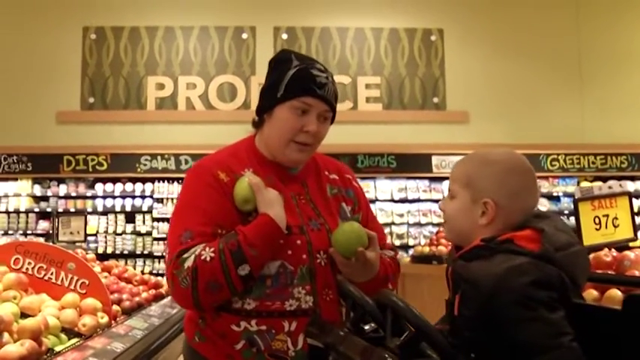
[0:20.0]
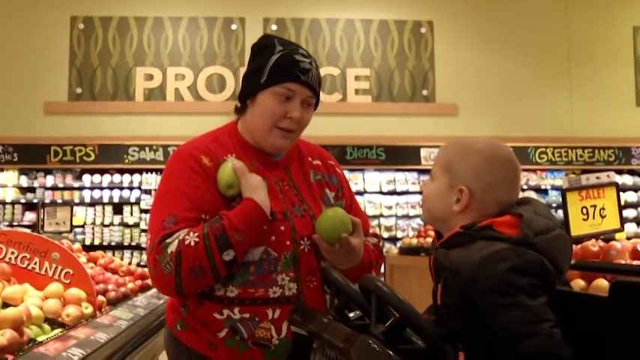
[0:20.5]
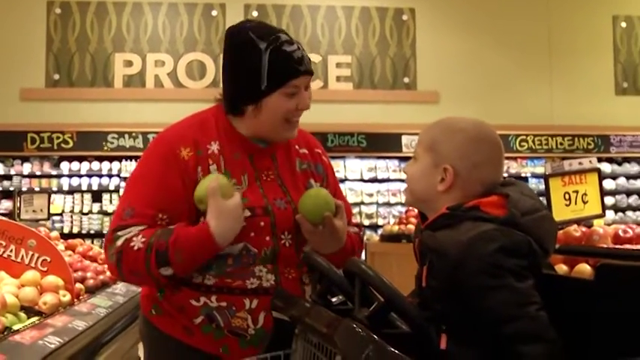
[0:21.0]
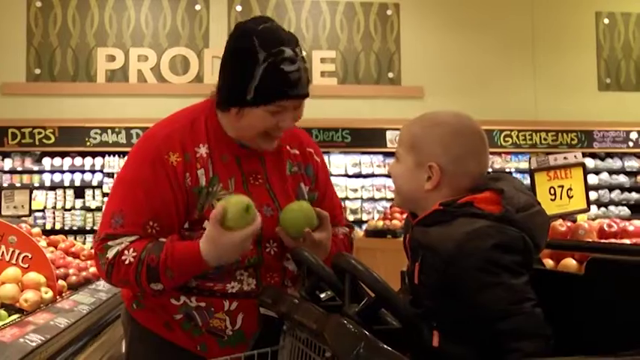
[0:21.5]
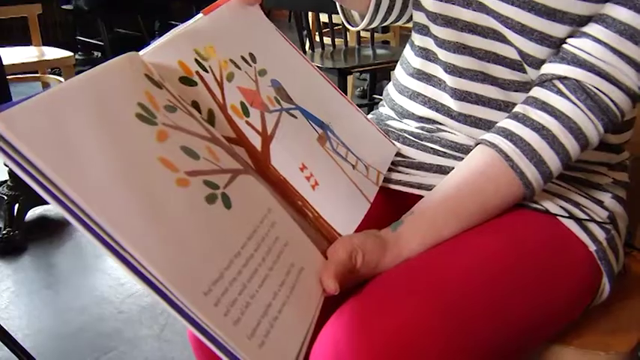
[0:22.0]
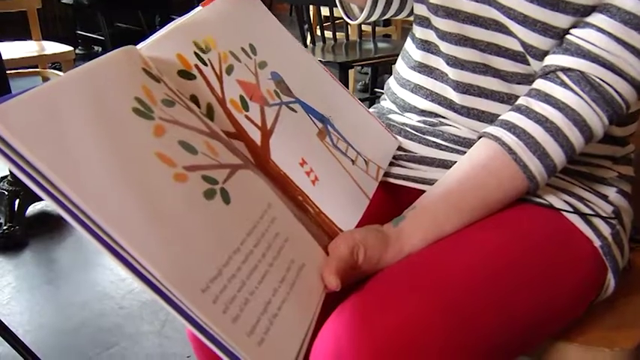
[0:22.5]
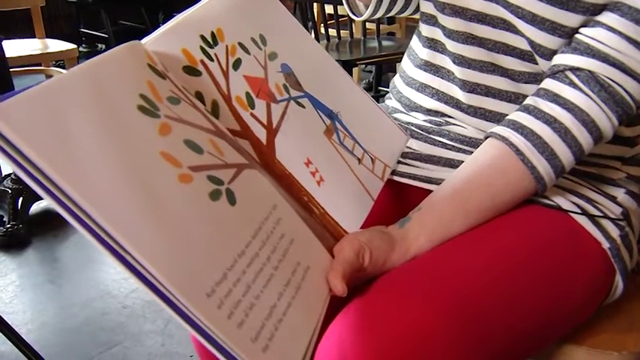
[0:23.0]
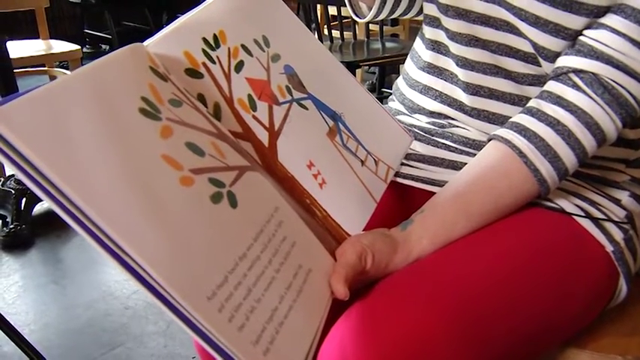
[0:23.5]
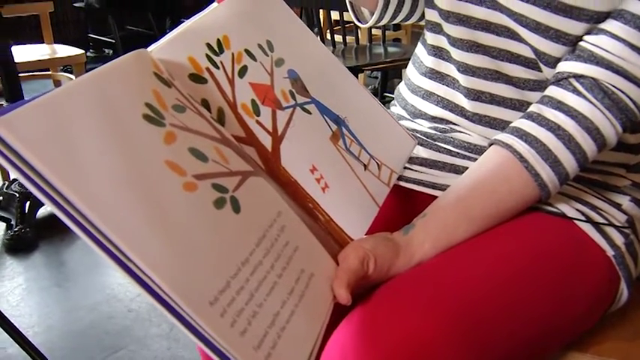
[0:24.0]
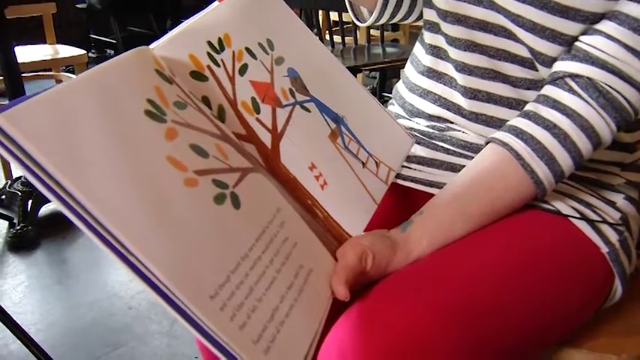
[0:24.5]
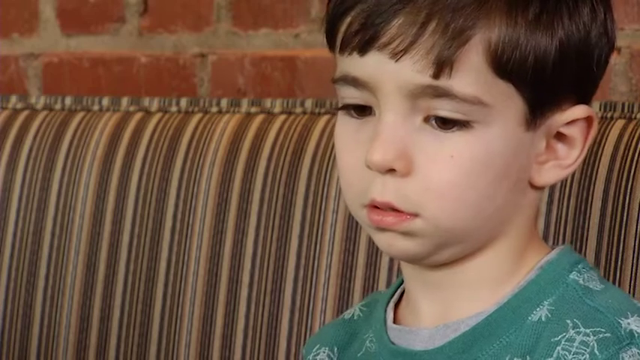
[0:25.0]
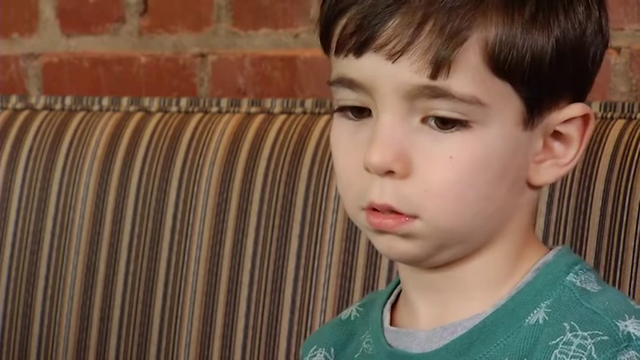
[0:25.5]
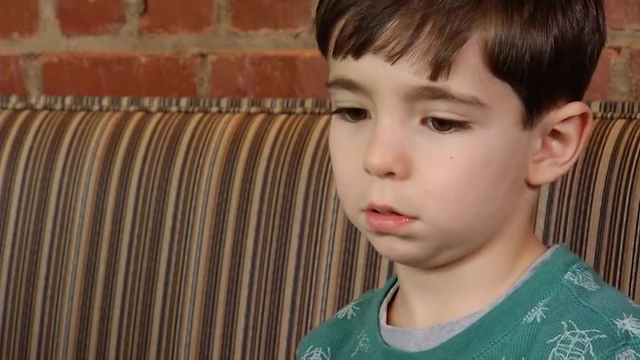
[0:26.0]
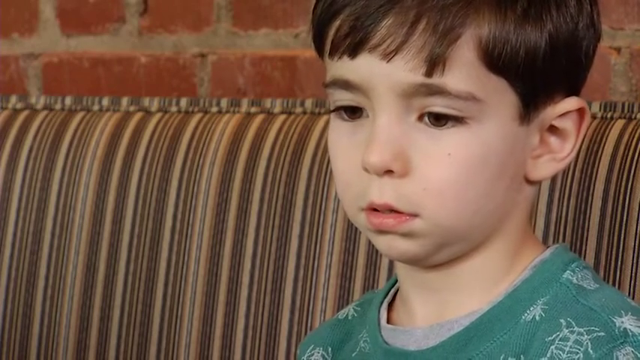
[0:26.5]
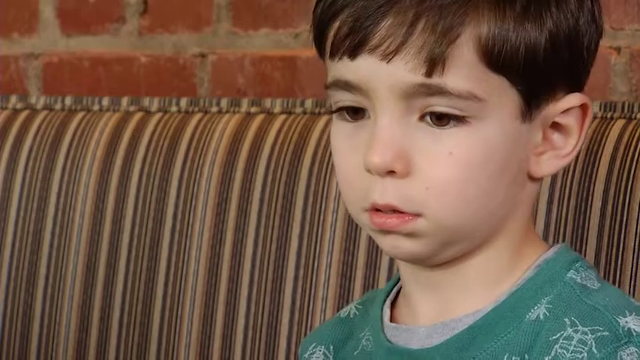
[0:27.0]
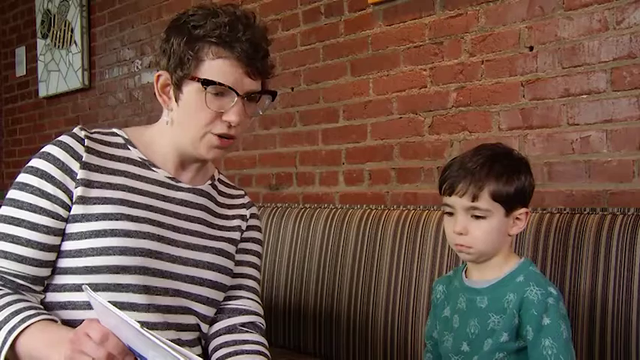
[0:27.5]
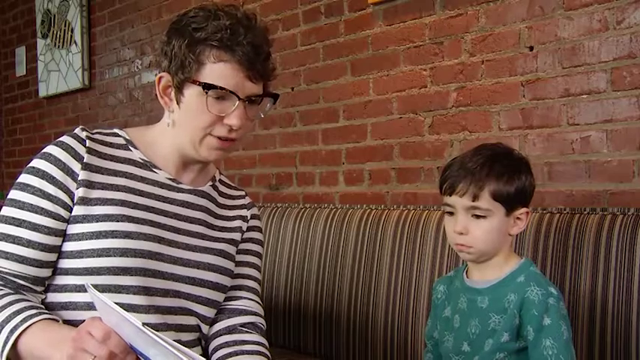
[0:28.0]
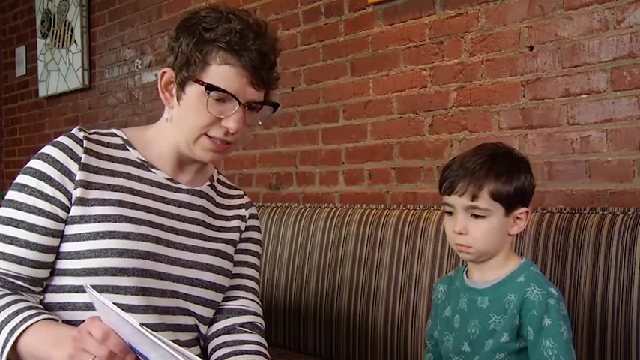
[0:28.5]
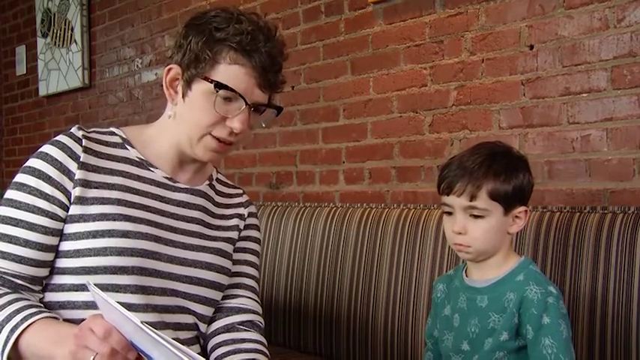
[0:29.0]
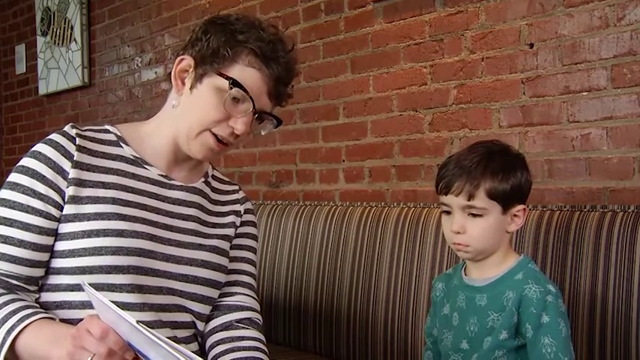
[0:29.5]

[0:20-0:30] The woman and her son continue to be shown. She seems to be wearing a Christmas sweater, has a black hat, and holds two apples, one in each hand. She tells her son something that makes him laugh, and her too. Next, a child's pair of hands holds an open book with a children's story, in which there is a drawn tree and a man in a blue uniform going up stairs to rescue a kite stuck in the tree. A close-up shows the child's face as a teacher with glasses and short hair reads to him; it looks like she is reading the story.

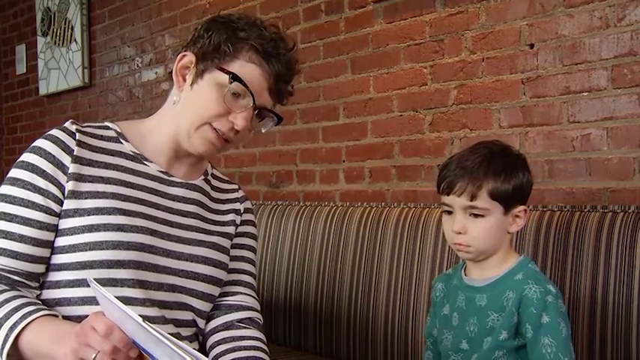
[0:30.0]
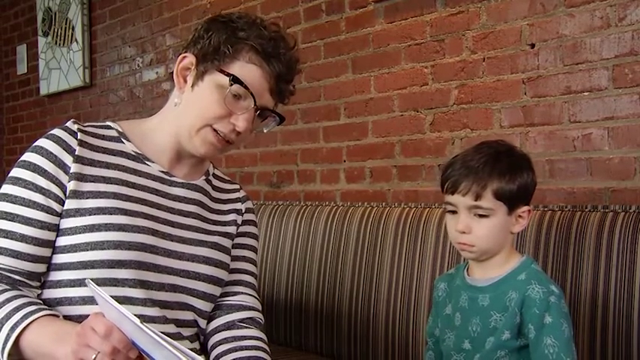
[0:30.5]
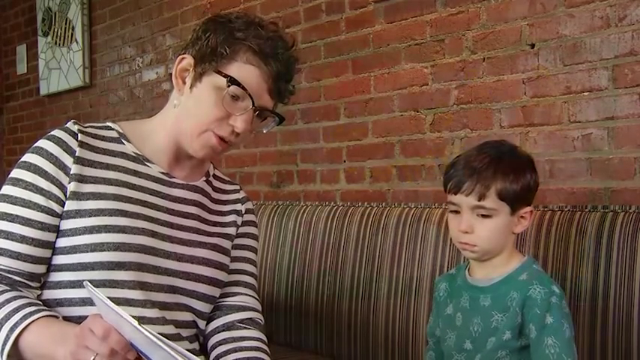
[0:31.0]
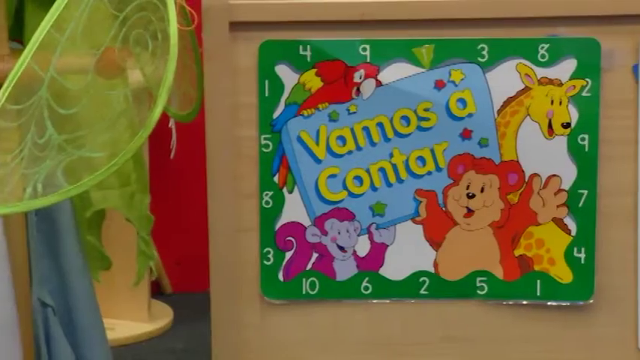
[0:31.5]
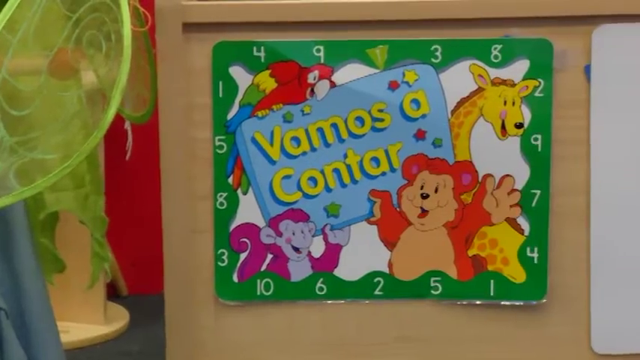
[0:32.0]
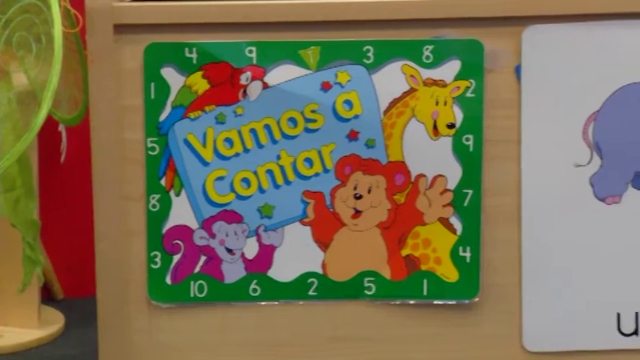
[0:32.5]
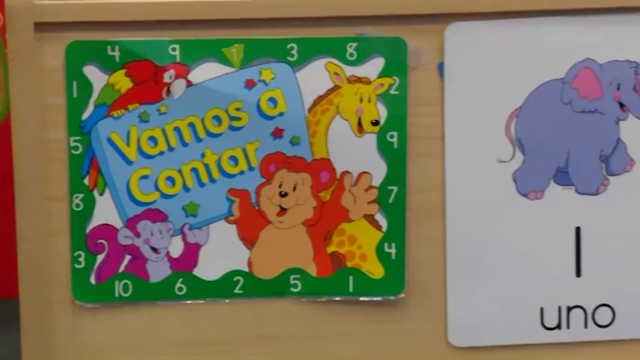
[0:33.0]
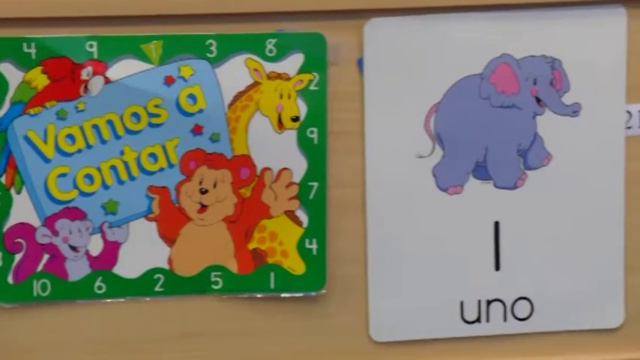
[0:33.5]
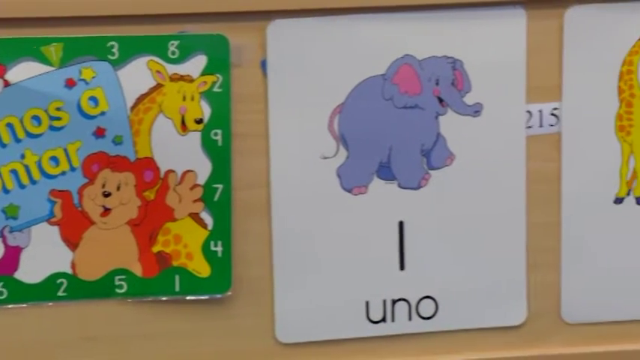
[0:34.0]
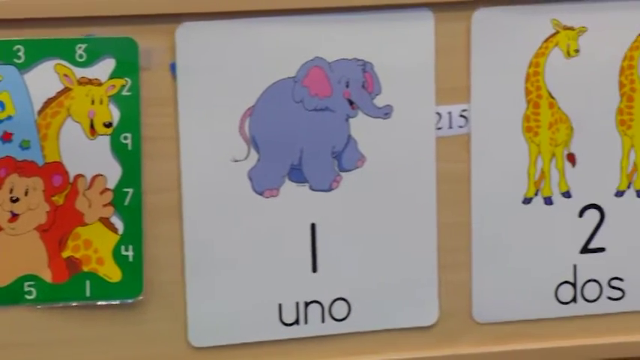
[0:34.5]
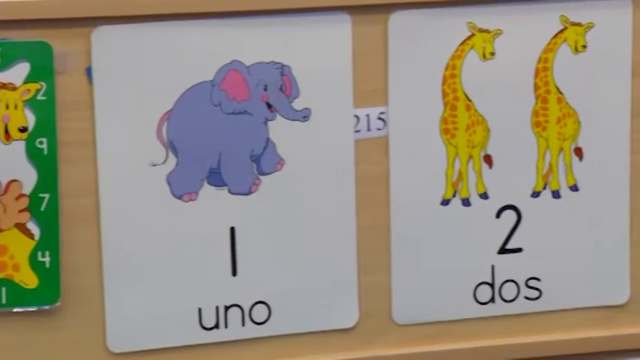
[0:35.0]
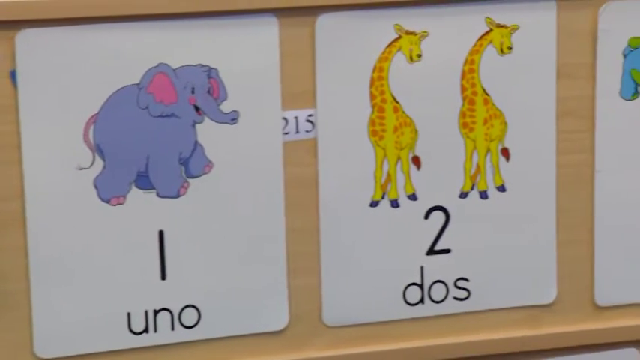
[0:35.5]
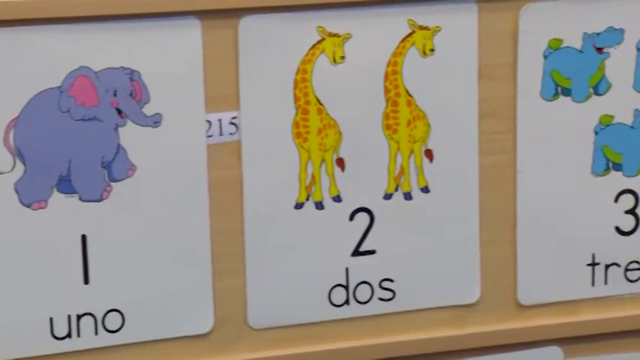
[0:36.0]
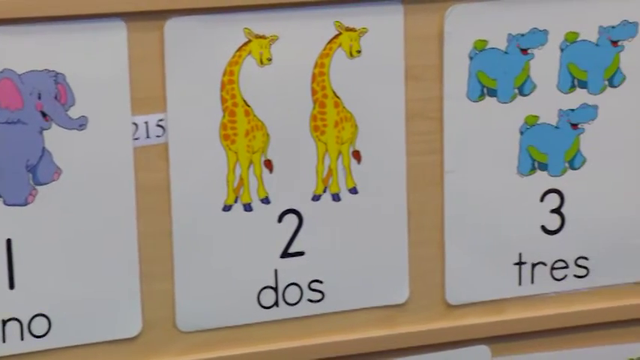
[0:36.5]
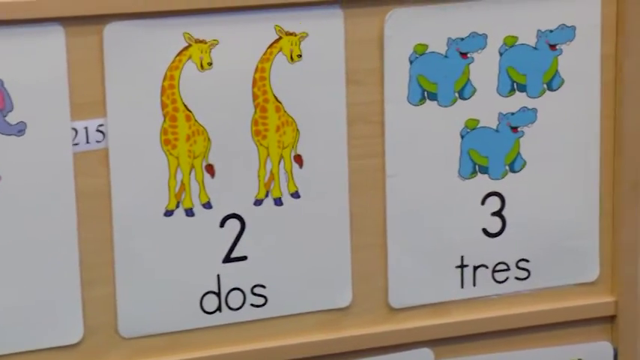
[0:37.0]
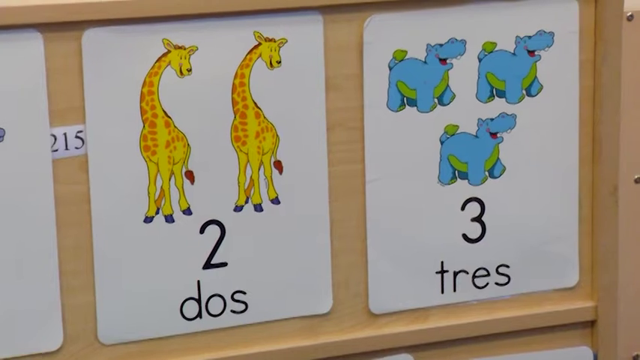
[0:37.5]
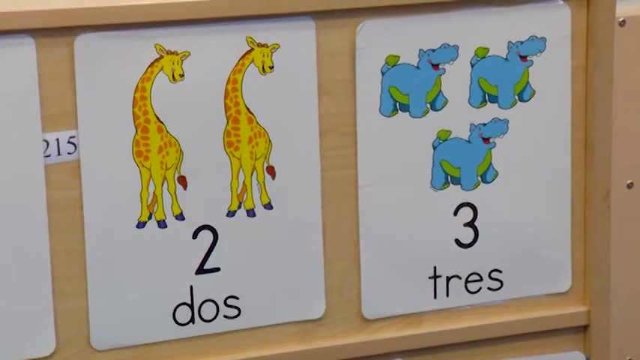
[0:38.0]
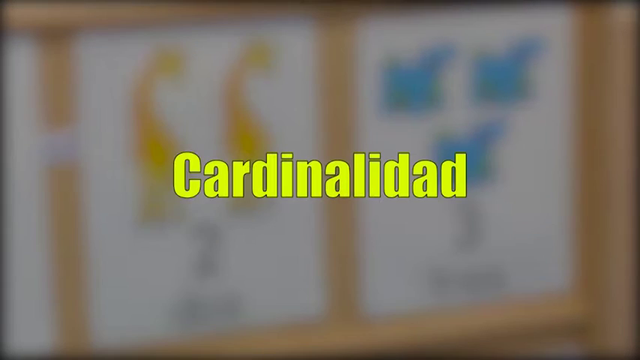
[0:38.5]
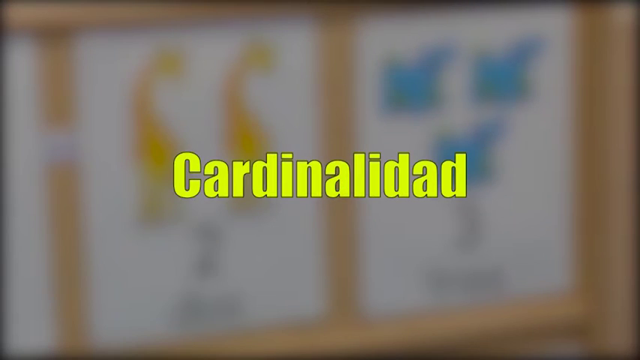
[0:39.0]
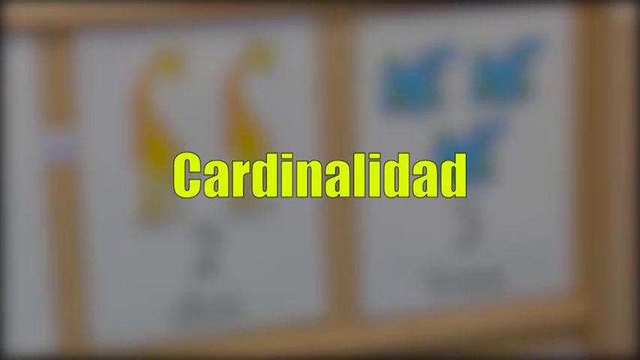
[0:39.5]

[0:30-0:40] The teacher, in a white blouse with black lines, keeps reading the story to the boy, whose facial expression looks a bit disappointed, sad or bored. Then the cover of another book appears, with a title meaning "let's count" written in Spanish. It has illustrations of animals such as a giraffe, a bear, a chango and a cotorro, and around them are the numbers 1 to 10, out of order. On the right are images from this book showing an elephant, two giraffes and three hippos, meant to teach counting.